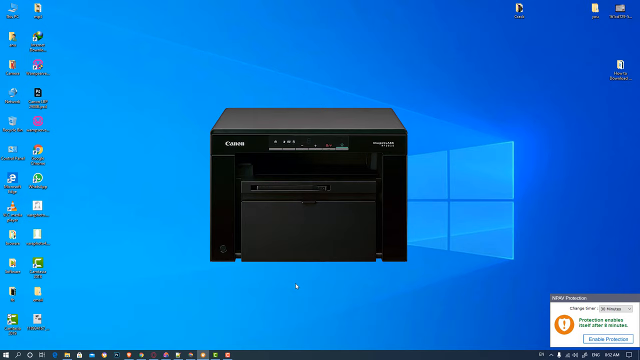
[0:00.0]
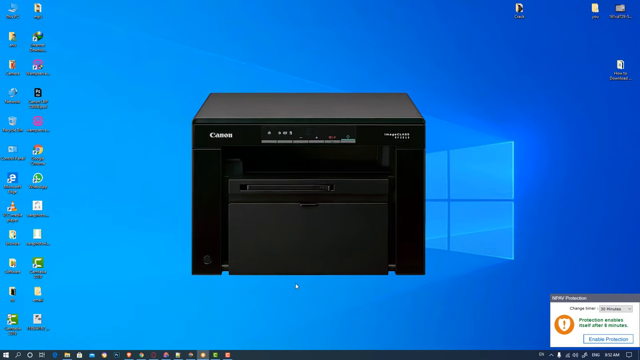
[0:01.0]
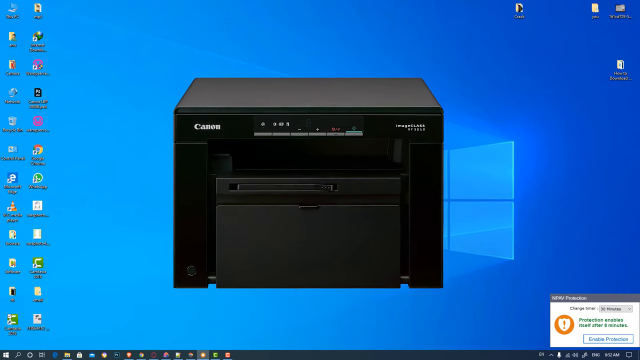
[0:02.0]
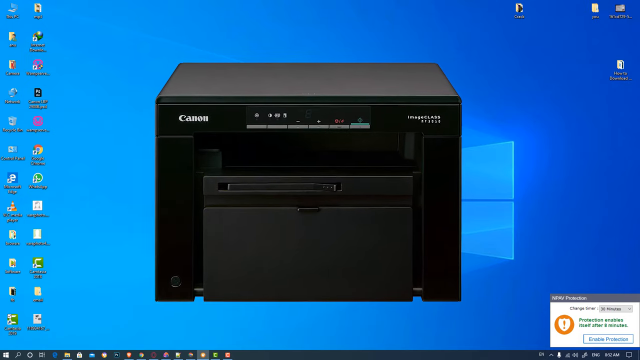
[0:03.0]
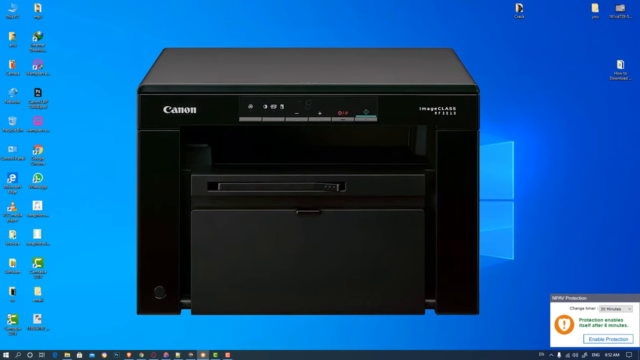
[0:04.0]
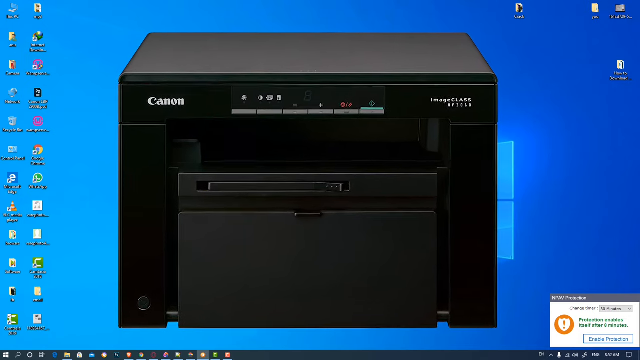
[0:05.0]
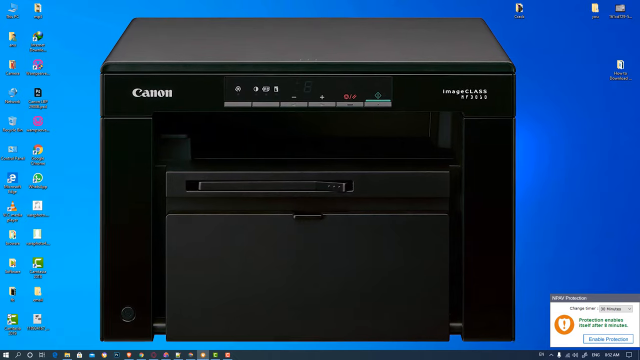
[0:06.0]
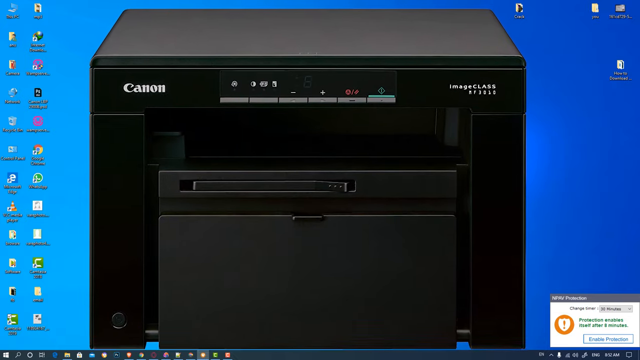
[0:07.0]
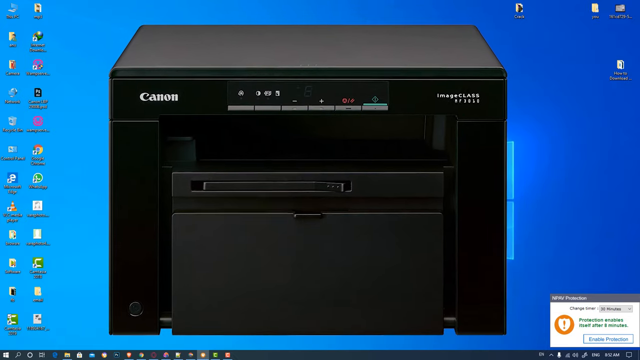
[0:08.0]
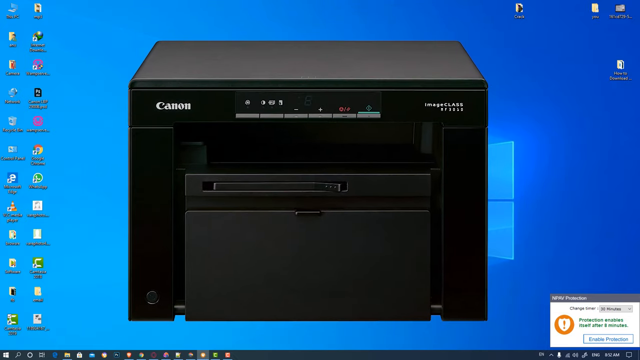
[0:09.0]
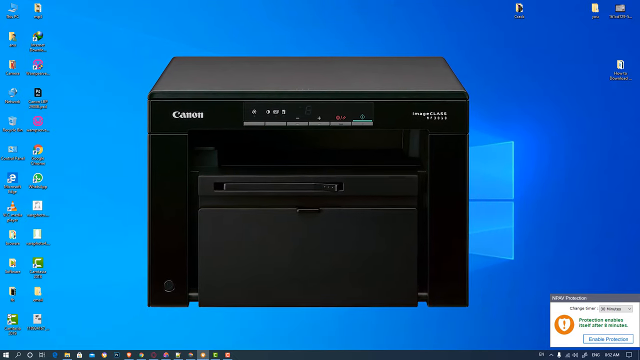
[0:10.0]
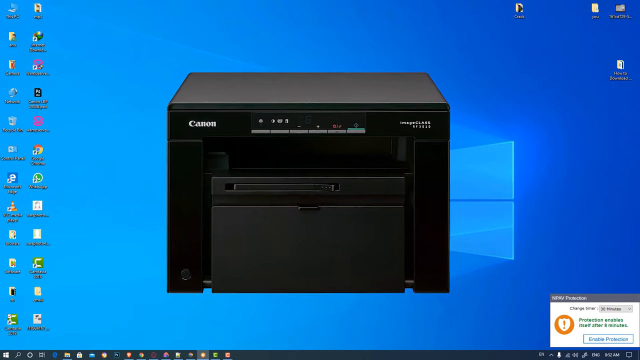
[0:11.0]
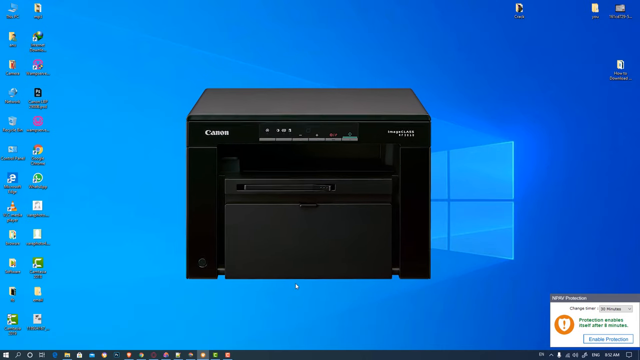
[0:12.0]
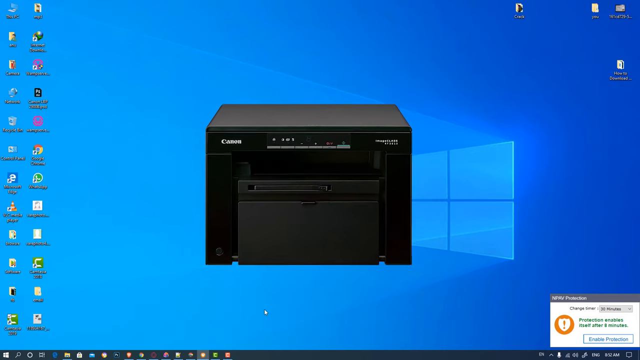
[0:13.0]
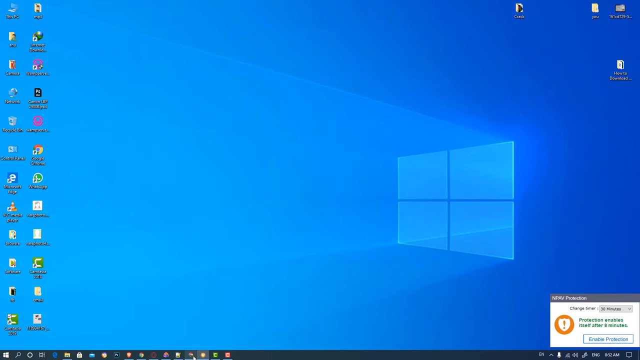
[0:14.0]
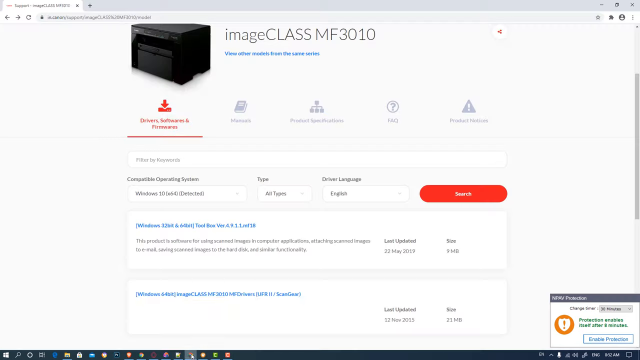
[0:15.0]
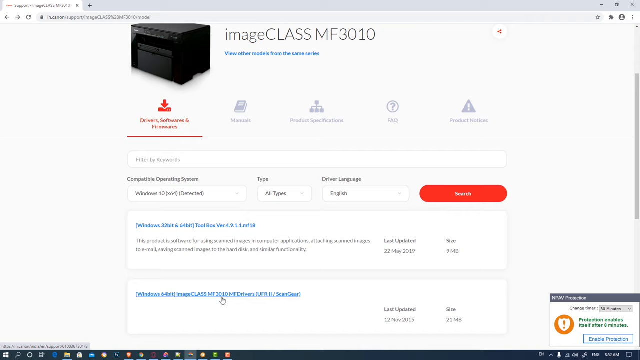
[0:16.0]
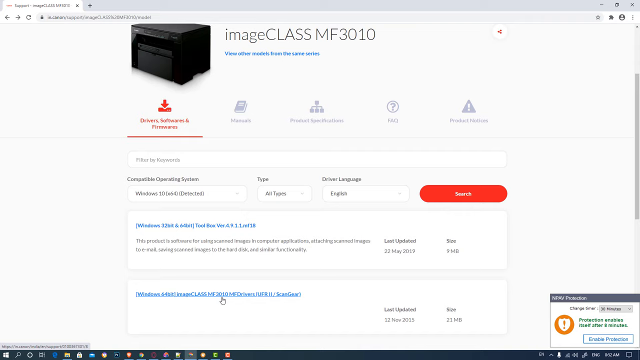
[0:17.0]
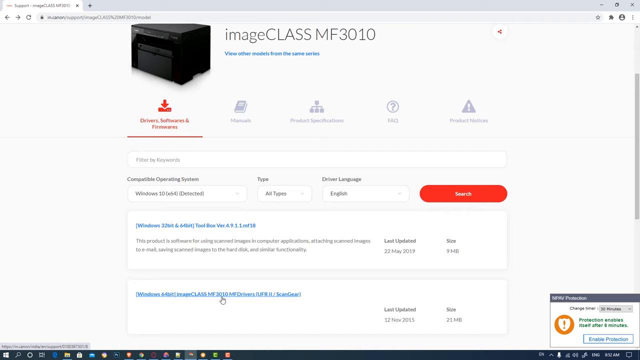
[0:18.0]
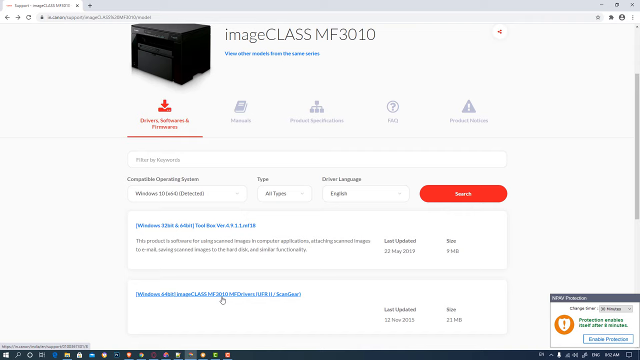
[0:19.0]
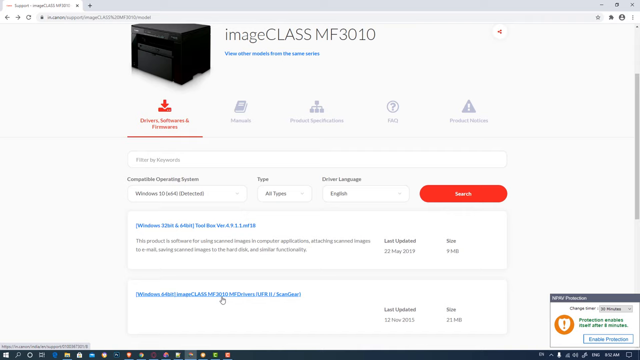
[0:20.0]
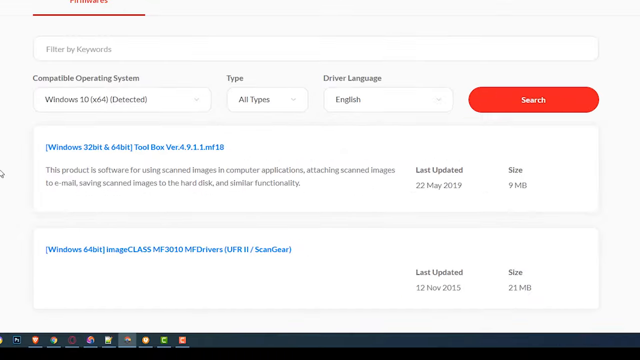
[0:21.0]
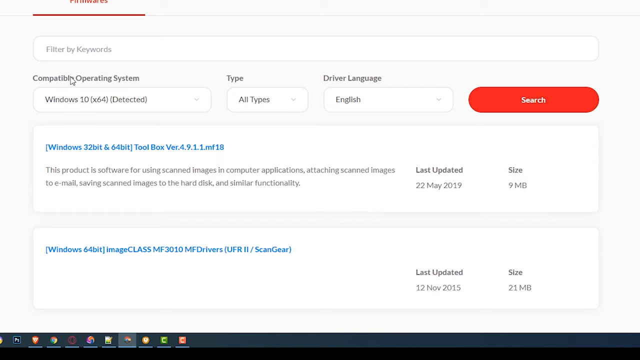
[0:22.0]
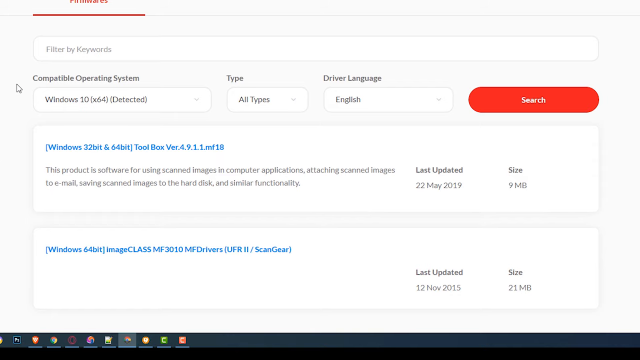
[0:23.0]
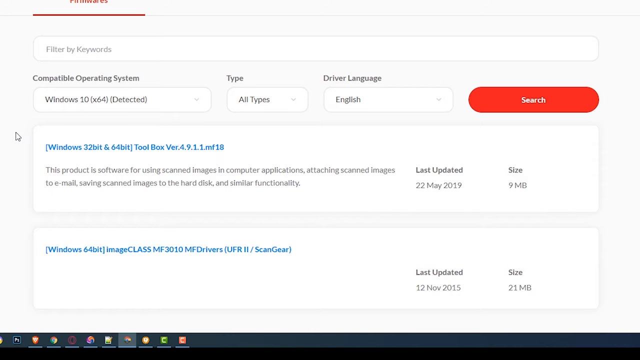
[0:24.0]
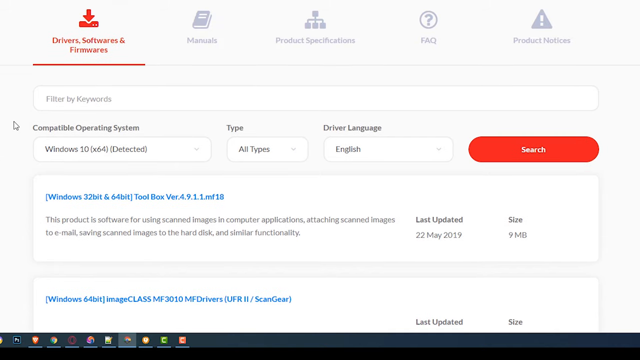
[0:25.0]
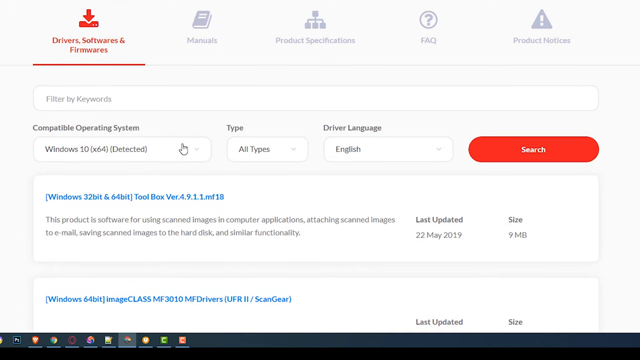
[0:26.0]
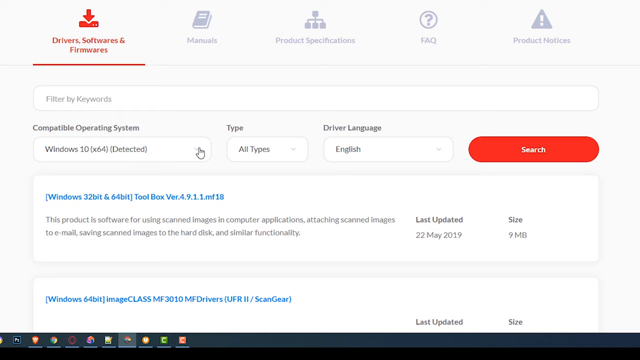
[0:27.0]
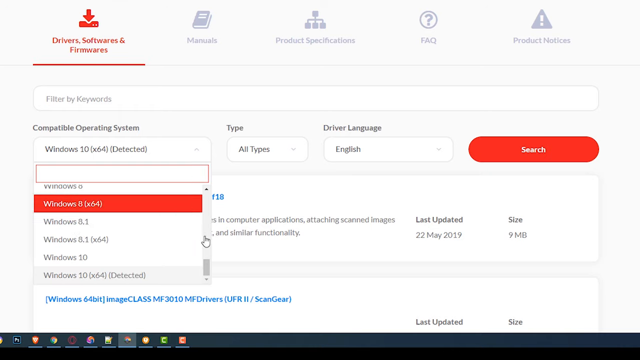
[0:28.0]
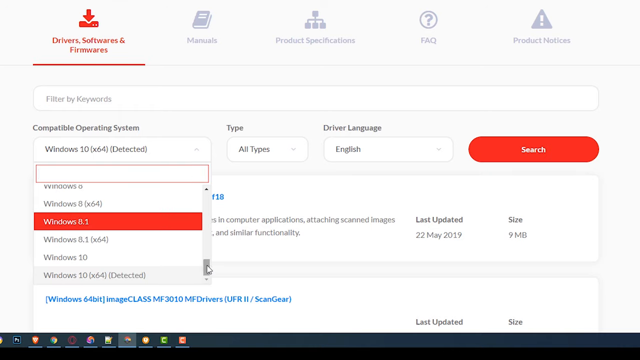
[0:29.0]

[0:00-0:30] The home screen of a computer is shown, and in the middle of it is what looks like a Canon printer. The printer seems to grow larger and larger until it appears to be as large as the rest of the screen, then it shrinks back down and disappears. A menu pops up at the bottom of the screen. The home screen has a blue background with what looks like a Windows logo, and there are two columns full of icons. The user seems to click on one of the icons, and it navigates to a website where the printer appears at the top of the screen, with black text to its right that says "image class mf3010".